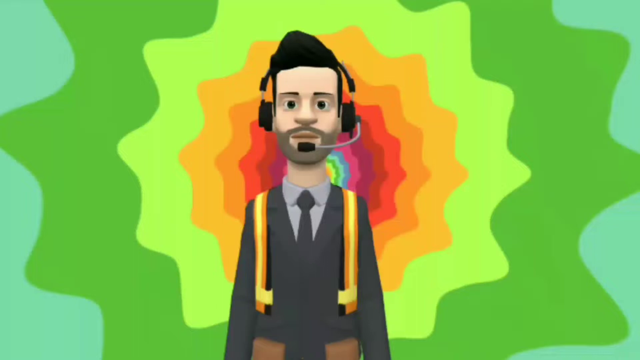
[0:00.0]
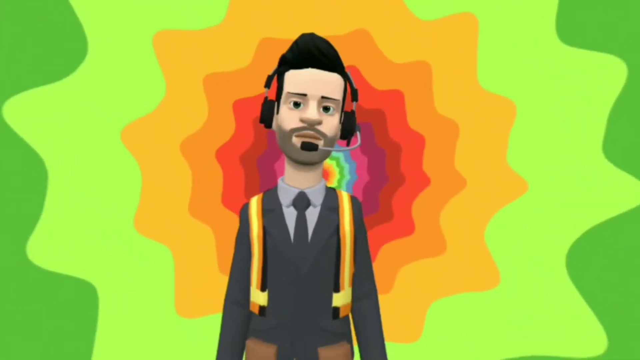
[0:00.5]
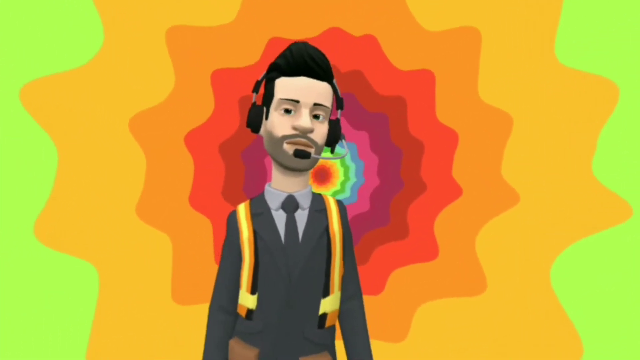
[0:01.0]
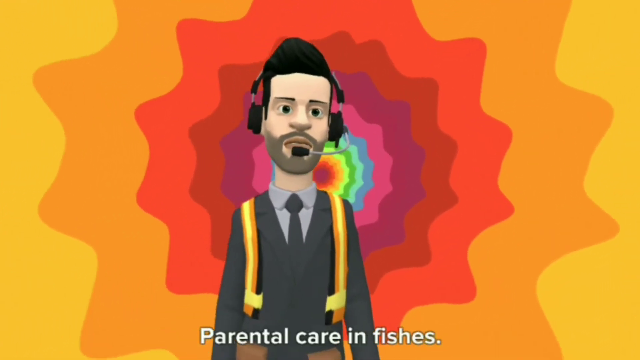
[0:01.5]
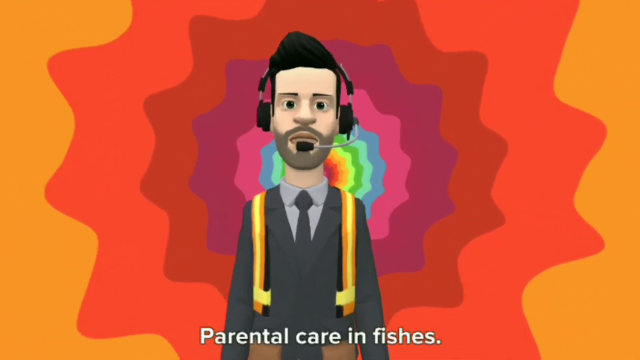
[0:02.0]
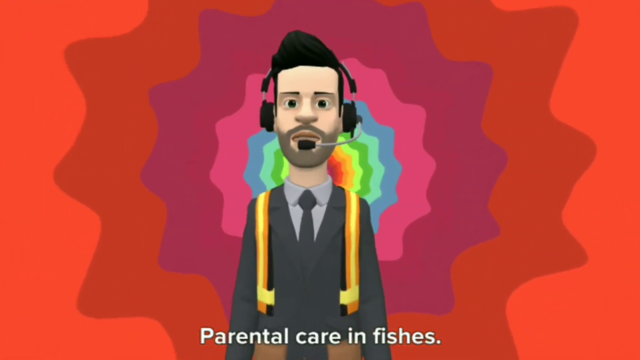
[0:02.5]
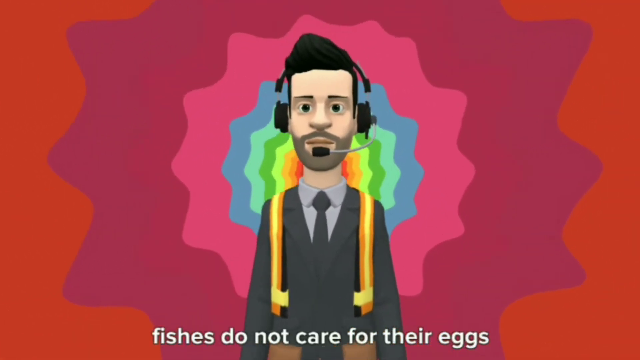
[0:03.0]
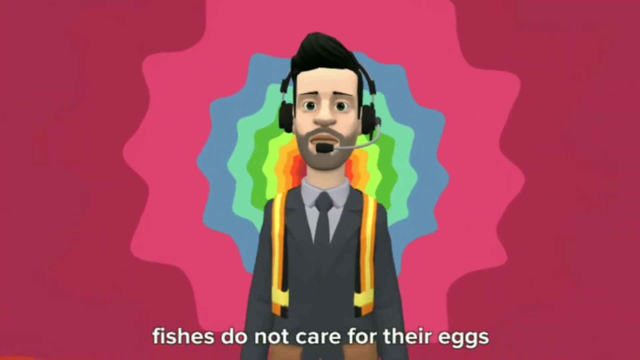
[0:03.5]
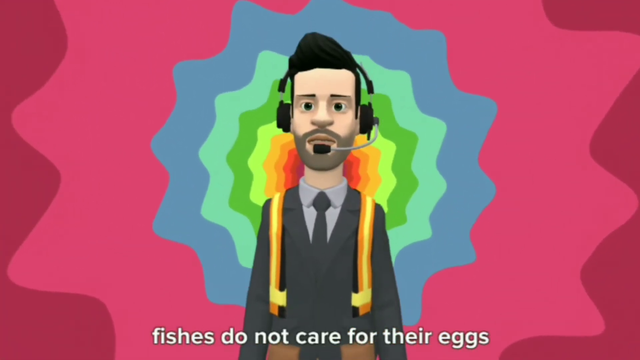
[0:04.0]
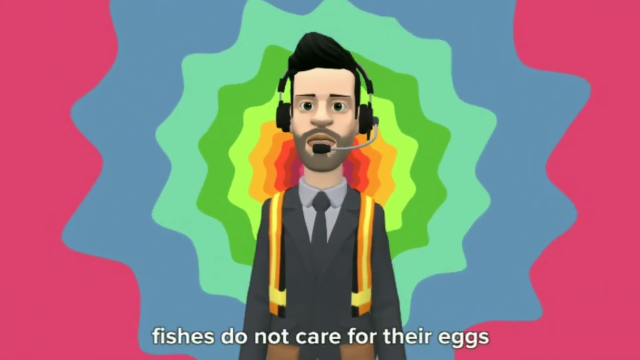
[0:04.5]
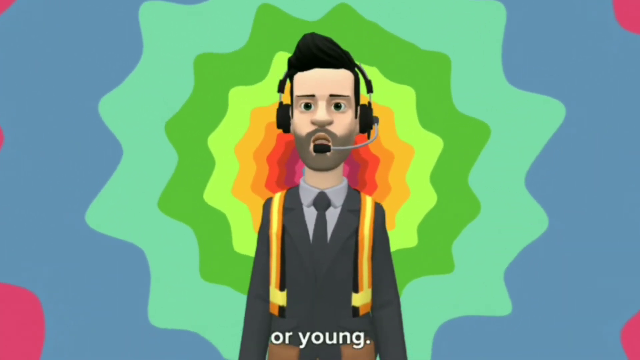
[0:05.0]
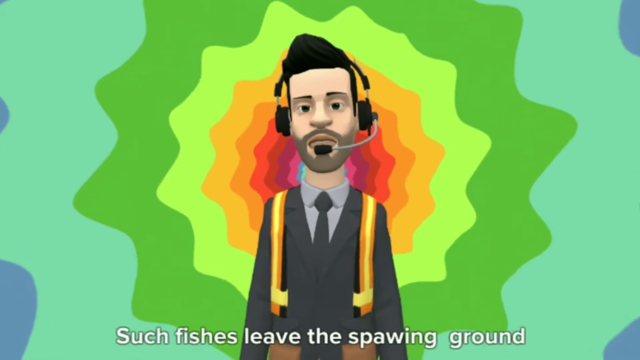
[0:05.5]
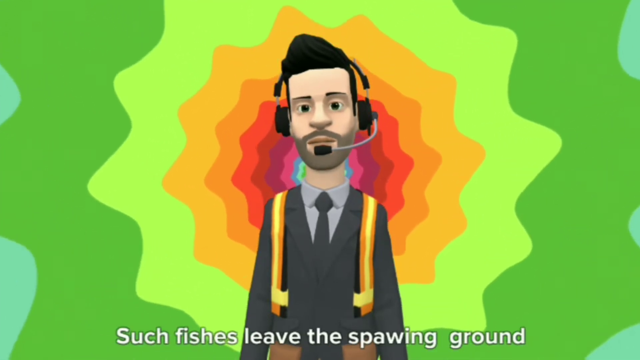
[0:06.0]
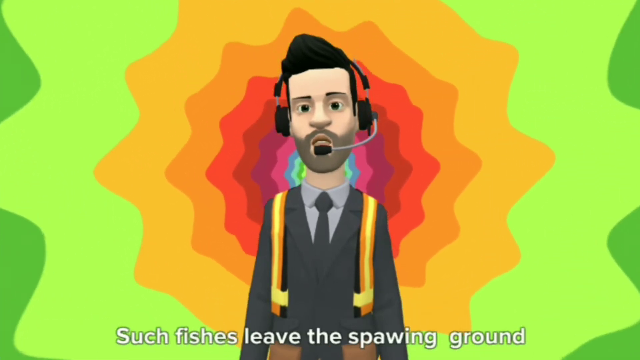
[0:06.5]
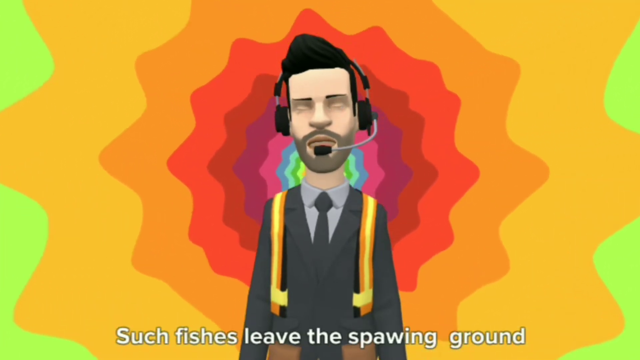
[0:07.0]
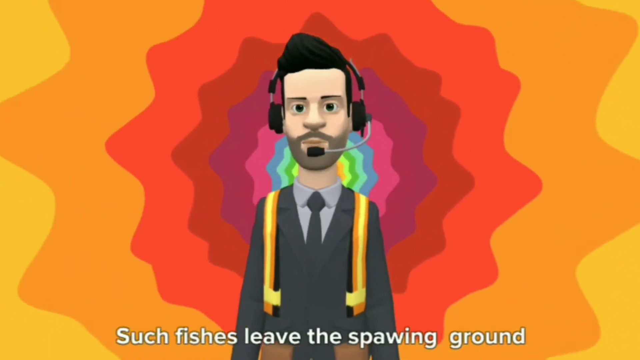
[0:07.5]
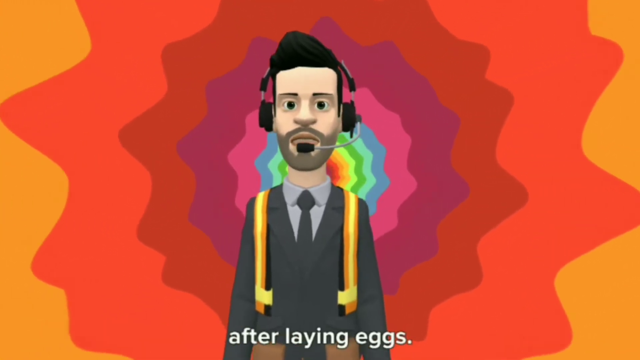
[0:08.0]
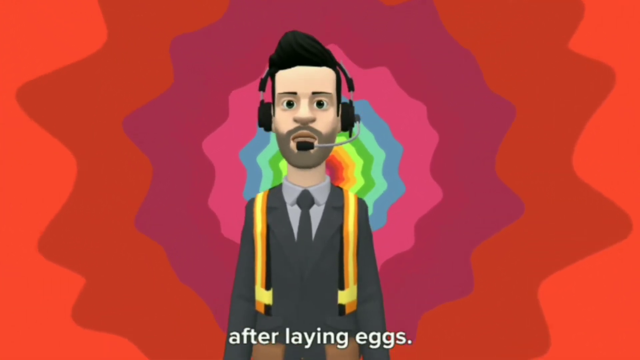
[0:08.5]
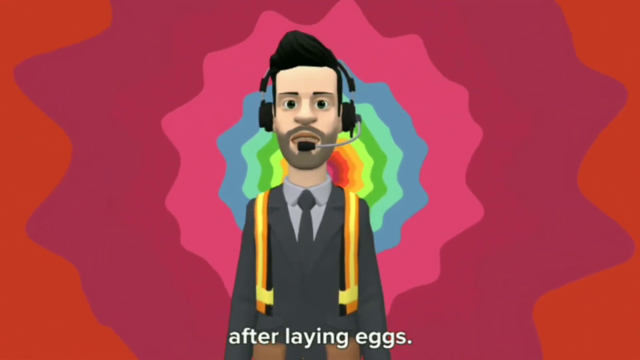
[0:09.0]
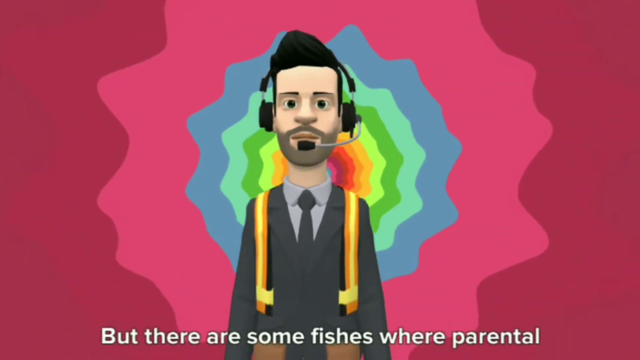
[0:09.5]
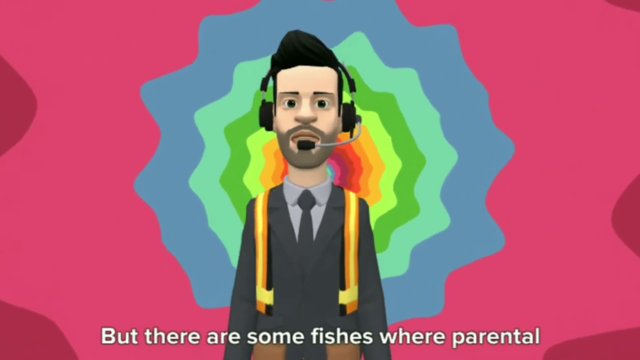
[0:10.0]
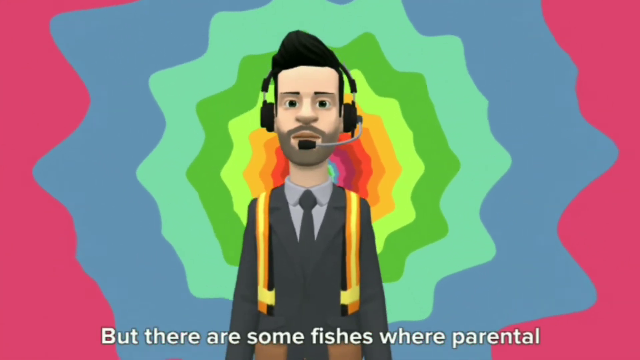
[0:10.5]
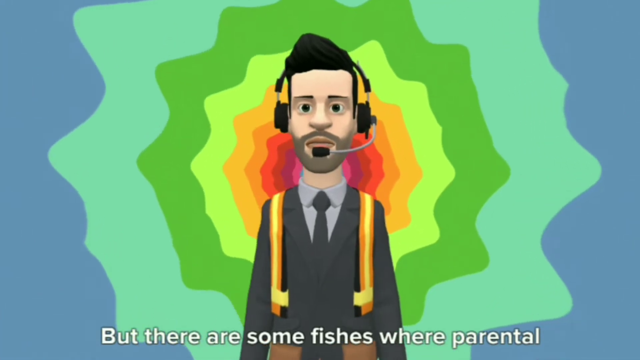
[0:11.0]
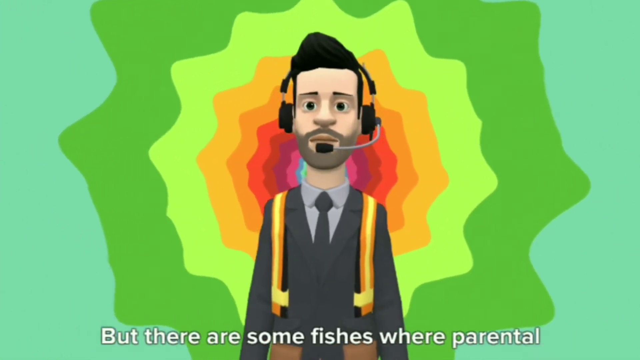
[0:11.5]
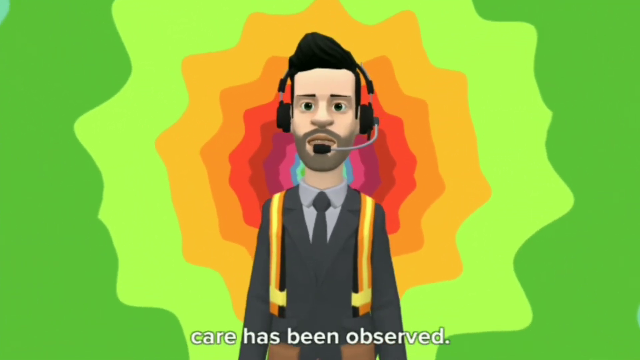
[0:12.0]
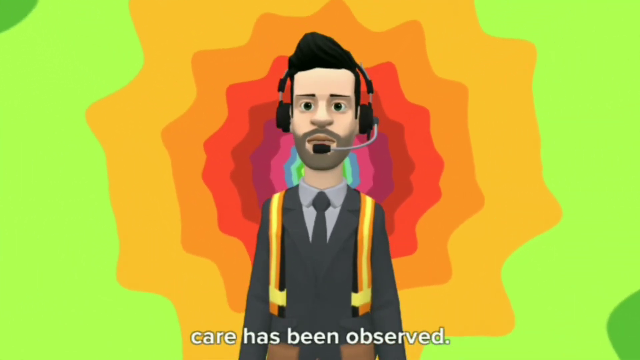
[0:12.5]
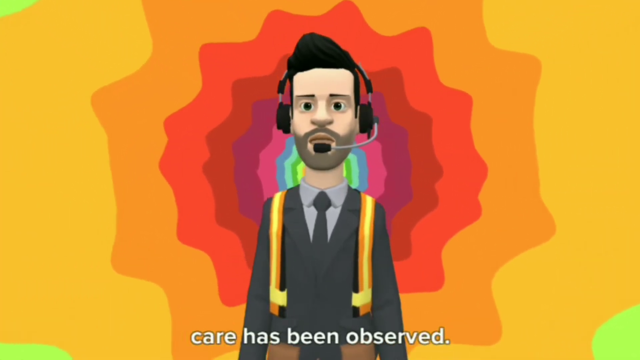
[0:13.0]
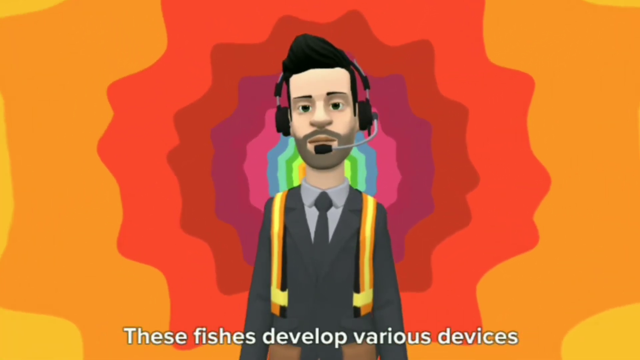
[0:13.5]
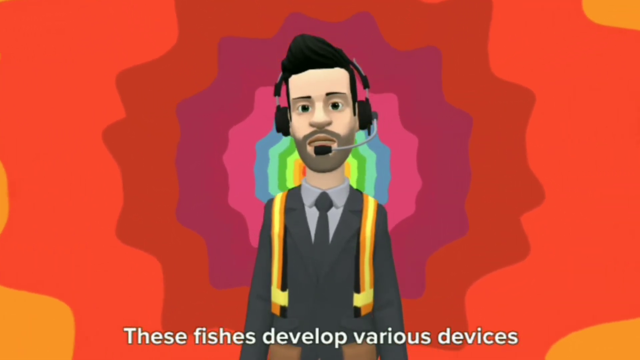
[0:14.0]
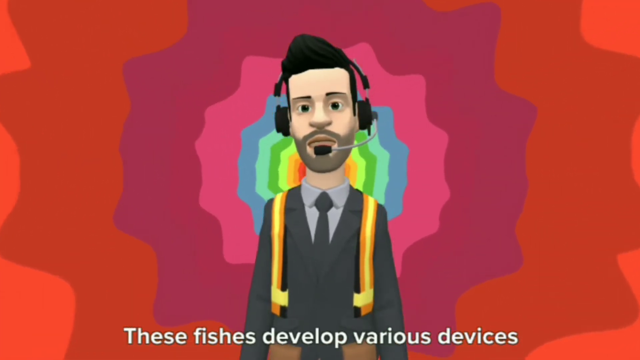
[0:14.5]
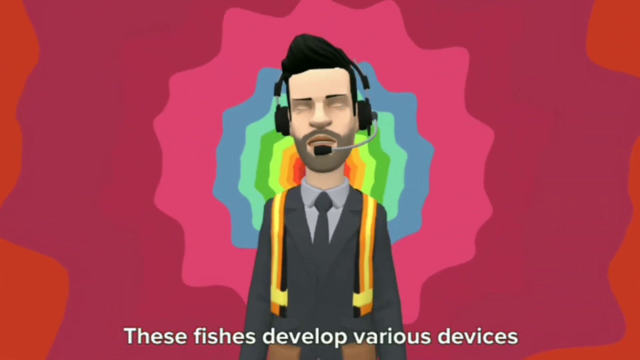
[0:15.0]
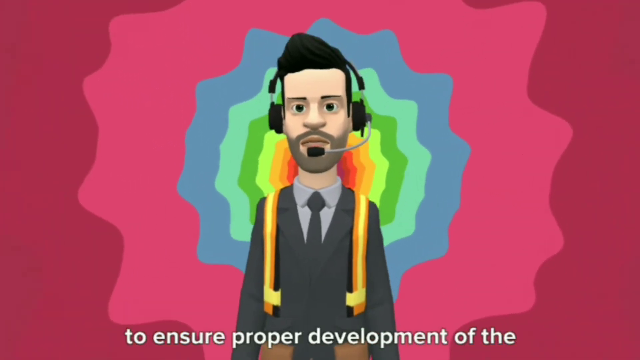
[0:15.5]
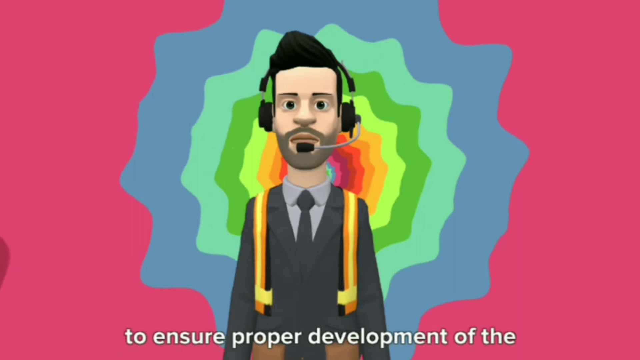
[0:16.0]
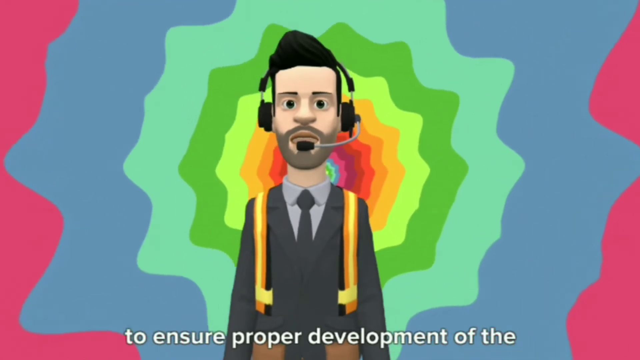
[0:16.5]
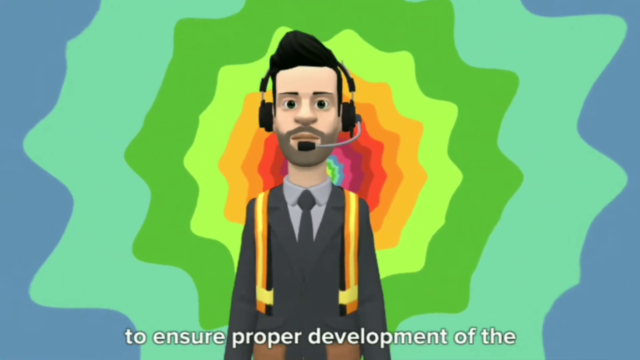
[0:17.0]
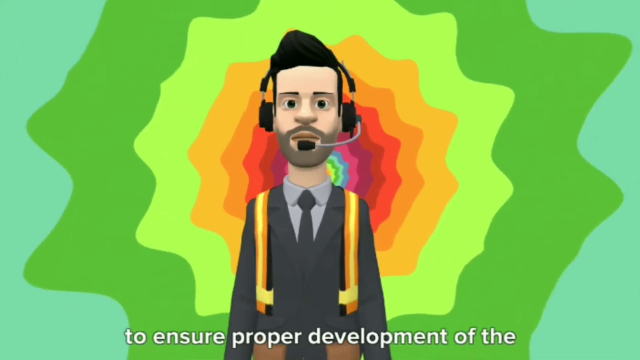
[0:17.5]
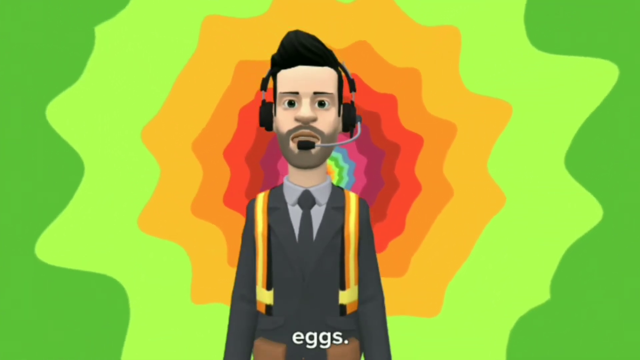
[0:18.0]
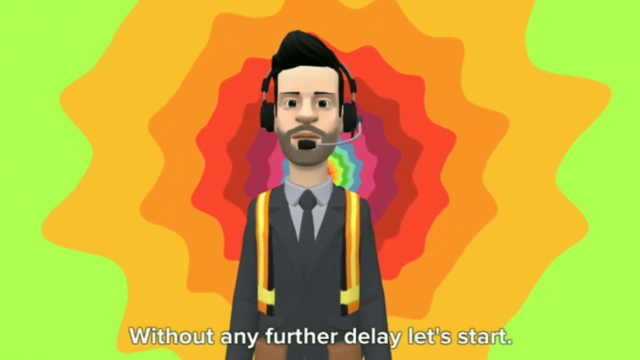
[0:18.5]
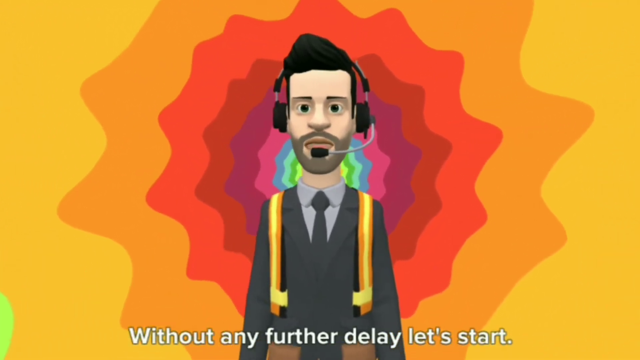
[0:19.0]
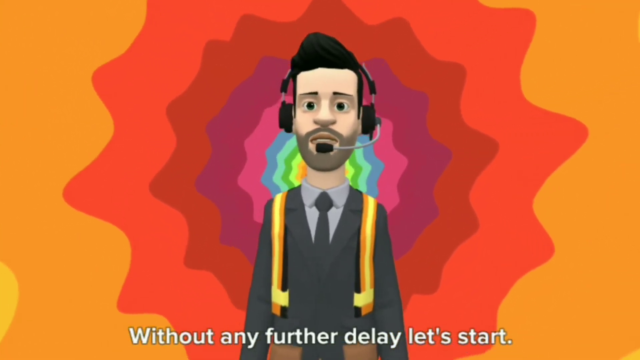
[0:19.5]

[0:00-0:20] A cartoon-type character has a headset over his ears, a beard, and something over his shoulders, and wears a suit and tie. The colours cycle through blues, greens, yellows, oranges, reds, purples and back to blues and greens, with a kind of 3D, tie-dye feel; the shapes are almost flower-like. He seems to be going down a hole. There is text at the bottom that is hard to read, something about laying eggs, and some fishes appear.